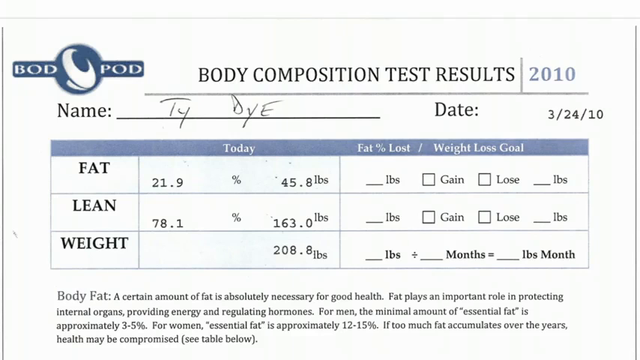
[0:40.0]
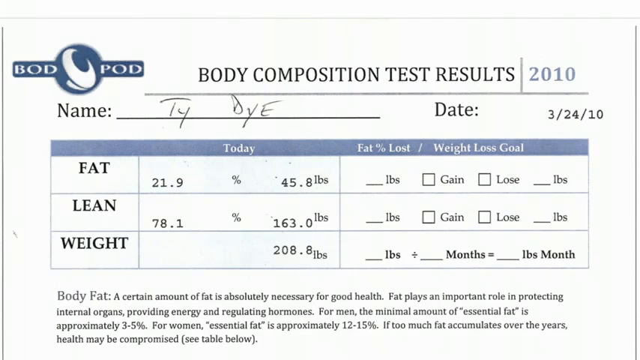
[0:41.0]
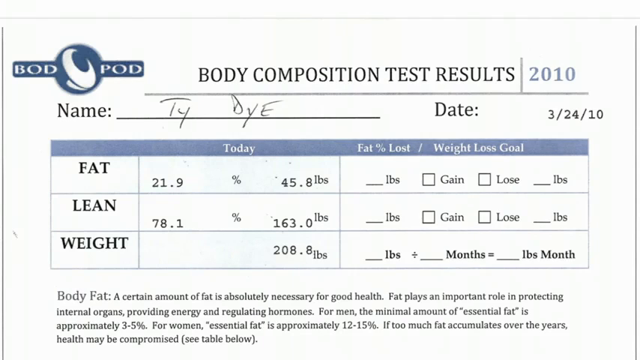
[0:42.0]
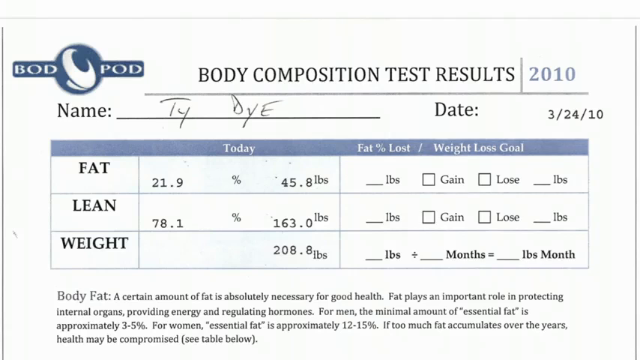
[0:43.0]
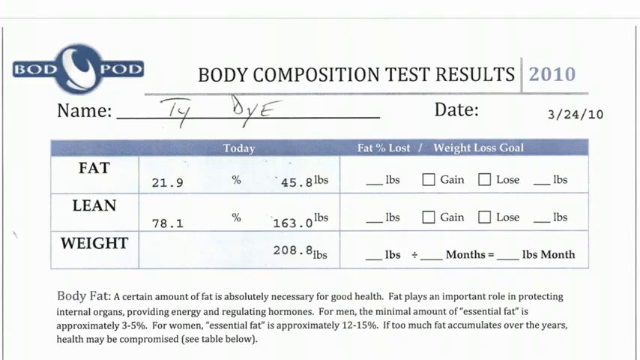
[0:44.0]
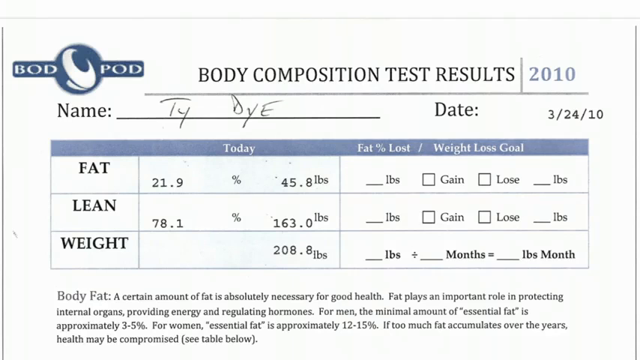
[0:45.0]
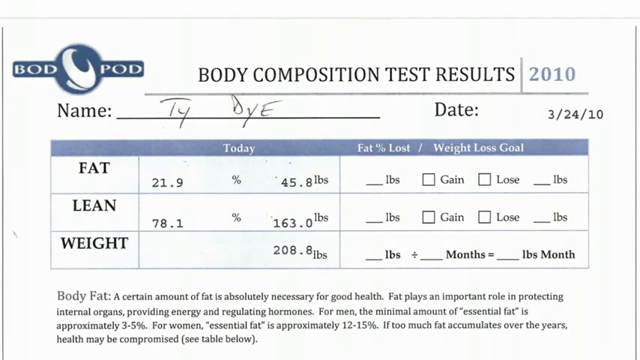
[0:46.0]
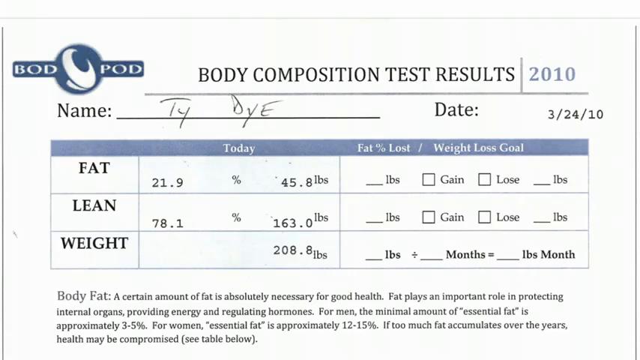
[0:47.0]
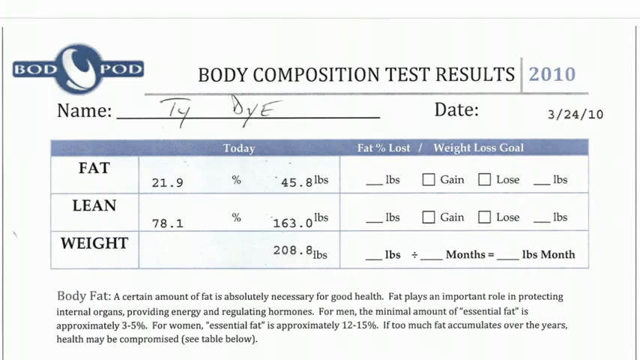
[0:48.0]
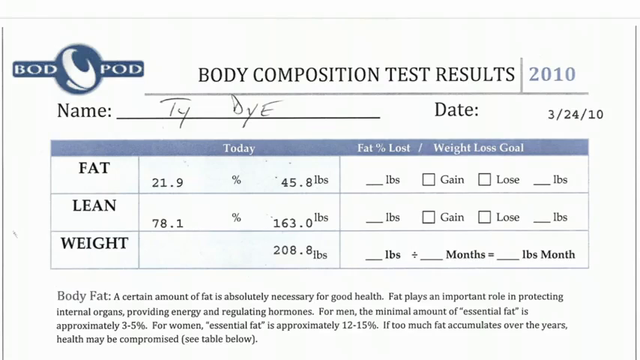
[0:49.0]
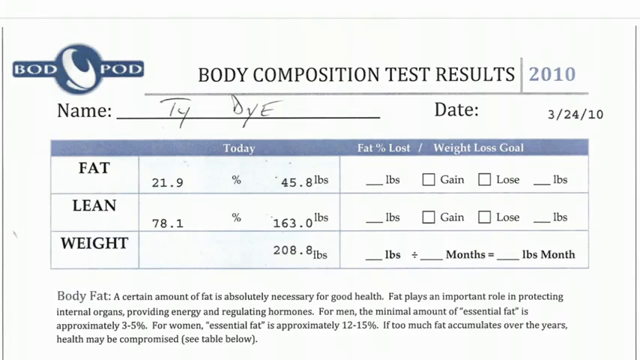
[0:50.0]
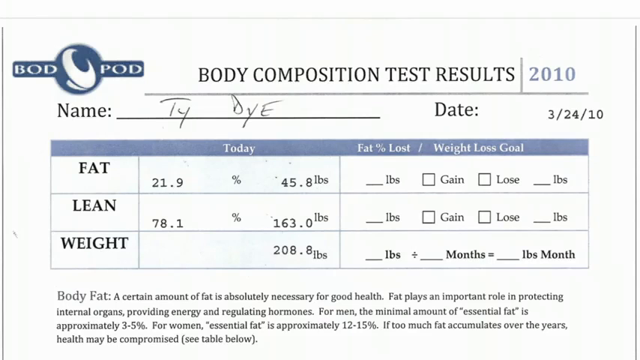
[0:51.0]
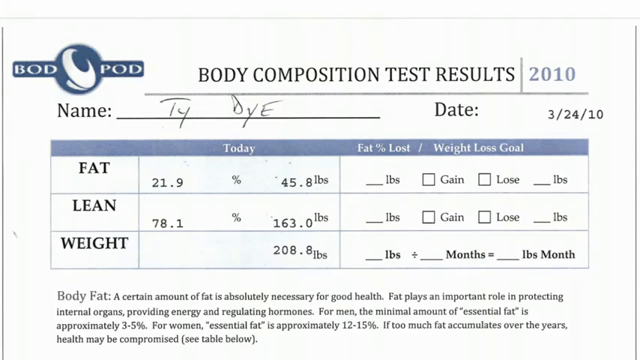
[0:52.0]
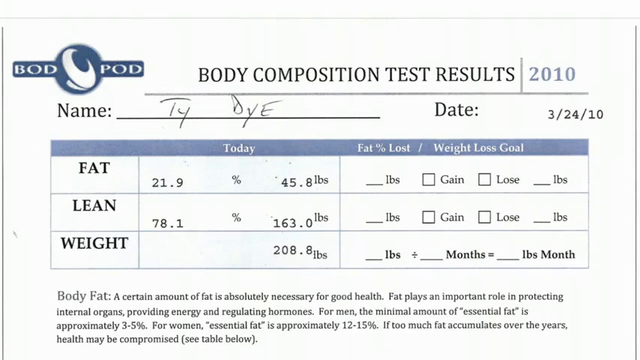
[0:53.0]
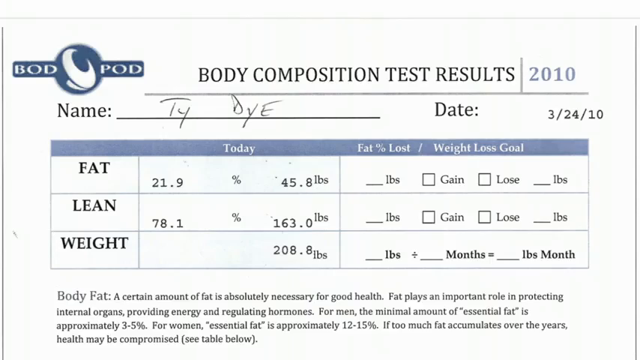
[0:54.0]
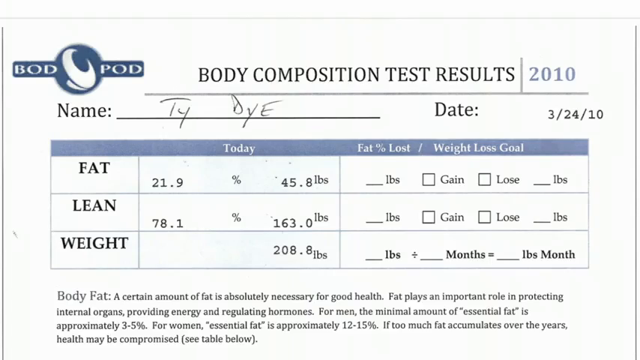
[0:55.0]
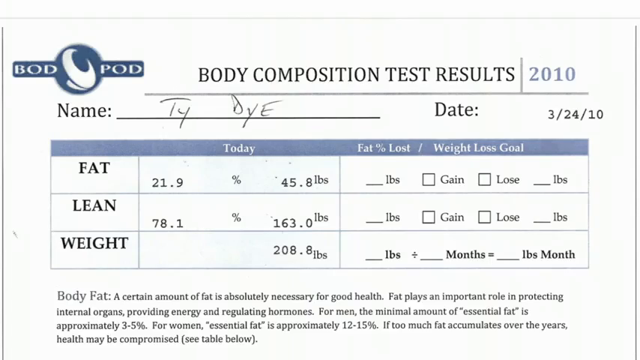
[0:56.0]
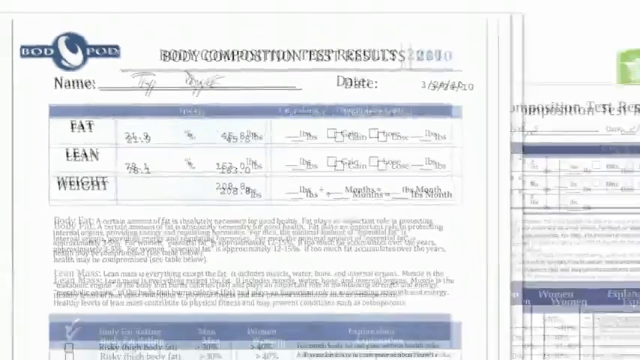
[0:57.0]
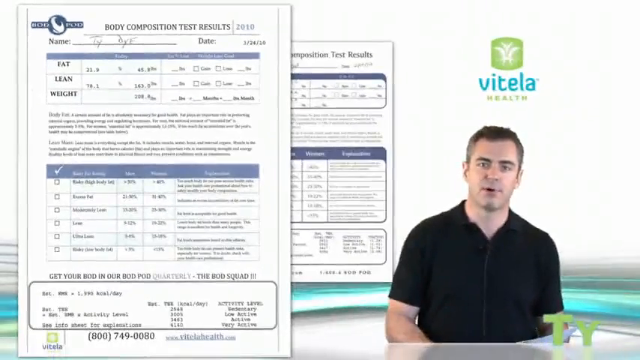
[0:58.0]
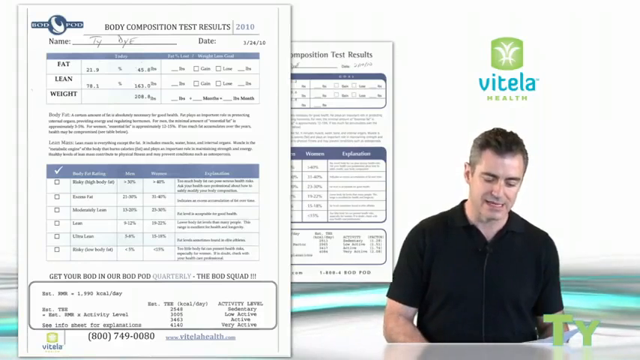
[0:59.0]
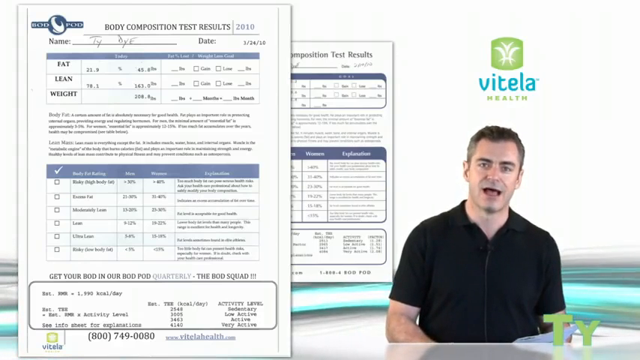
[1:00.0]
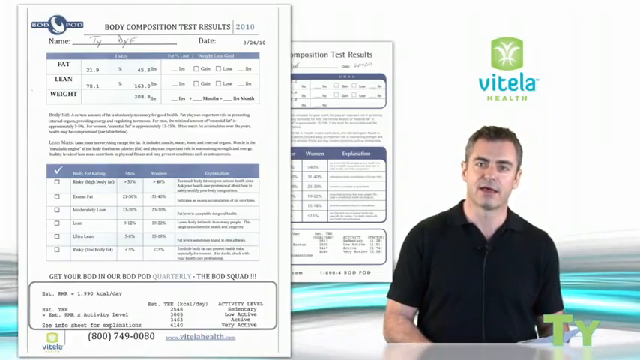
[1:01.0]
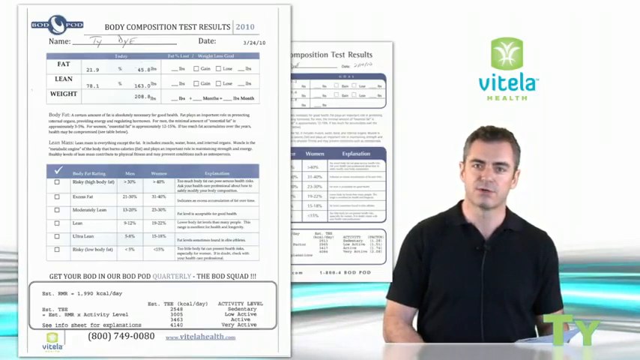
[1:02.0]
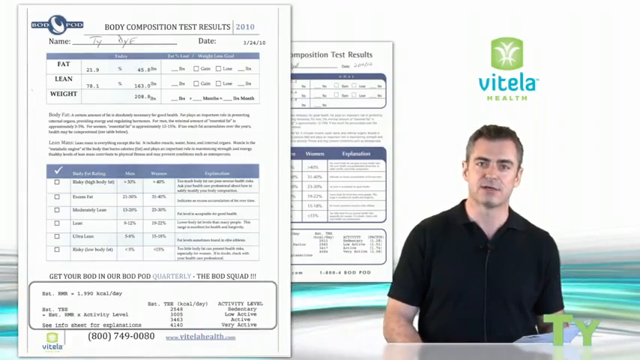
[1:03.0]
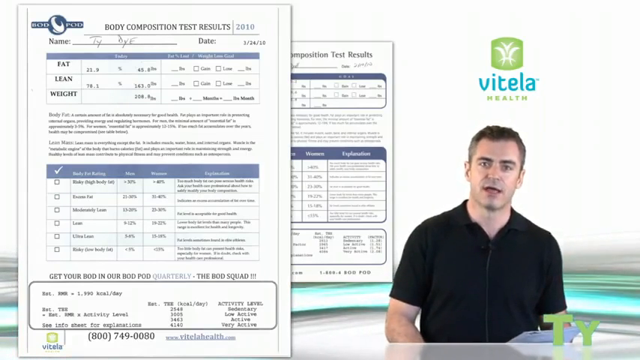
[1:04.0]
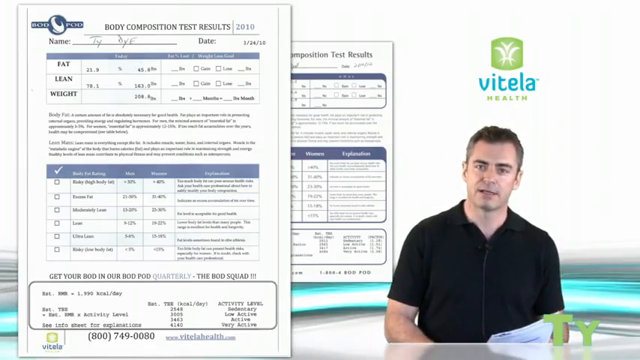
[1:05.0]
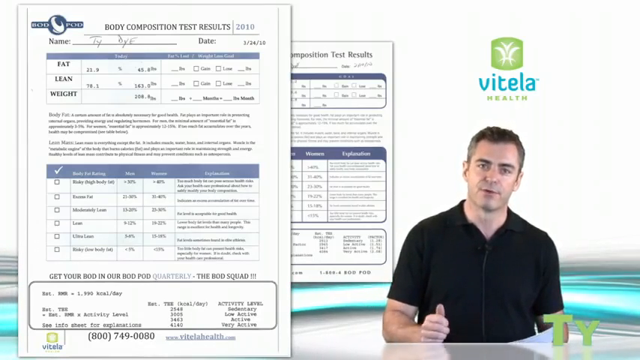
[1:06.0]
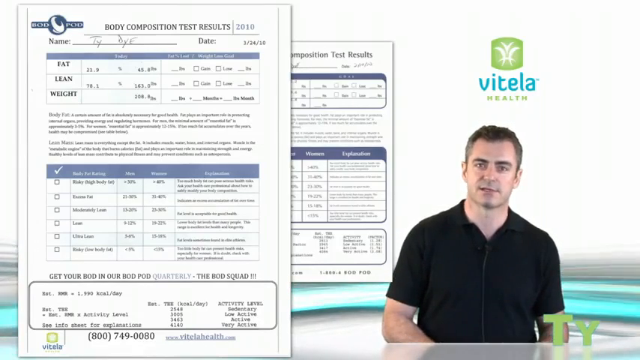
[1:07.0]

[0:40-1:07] An image of the body composition test results is shown, with "2010", the name Ty Dye, and the date "3-24-10". Below that is a grayed-out band with "today" on the left-hand side and "fat percentage lost / weight loss goal" in the center. Below that, three horizontal columns are labeled, top to bottom, fat, lean, and weight. Under today, fat reads "21.9 percent 45.8 pounds", lean reads "78.1 percent 163 pounds", and weight reads "208.8 pounds". The markers under fat percent lost and weight loss goal are empty. Below that, text reads "Body fat. A certain amount of fat is absolutely necessary for good health. That plays an important role in protecting internal organs, providing energy, and regulating hormones. For men the minimum amount of essential fat is approximately 3 to 5 percent. For women essential fat is approximately 12 to 15 percent. If too much fat accumulates over the years health may be compromised. See table below." The screen then changes: the image shrinks into the background, and the man is shown on the right-hand side speaking to the camera. Above him is the logo in green with the word "vitela" in blue and the word "health" in green below that. The man looks at the camera, holding a paper in his left hand, and with his right hand he raises and lowers it as if to emphasize his words.